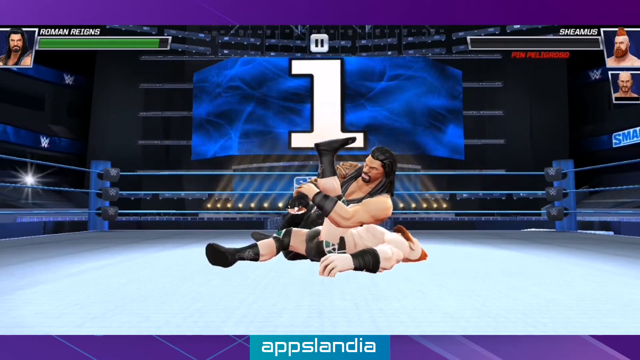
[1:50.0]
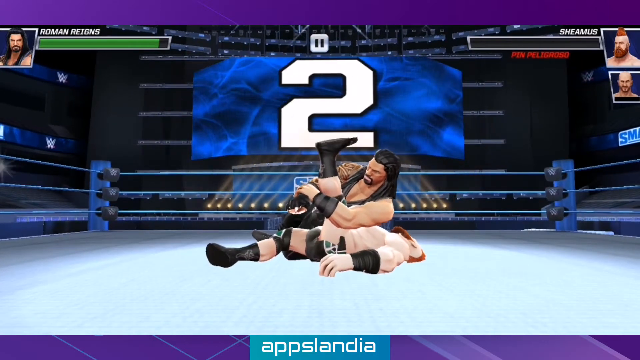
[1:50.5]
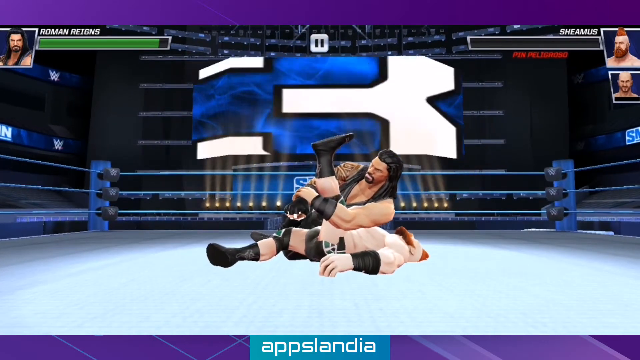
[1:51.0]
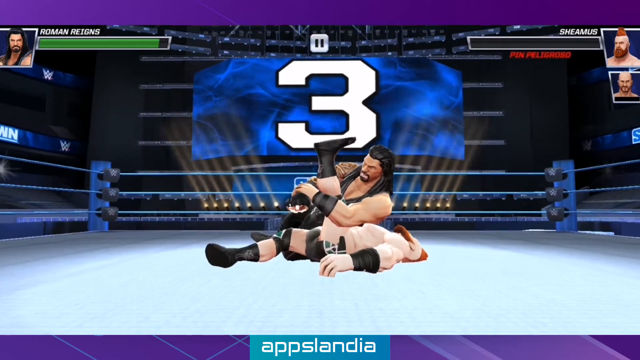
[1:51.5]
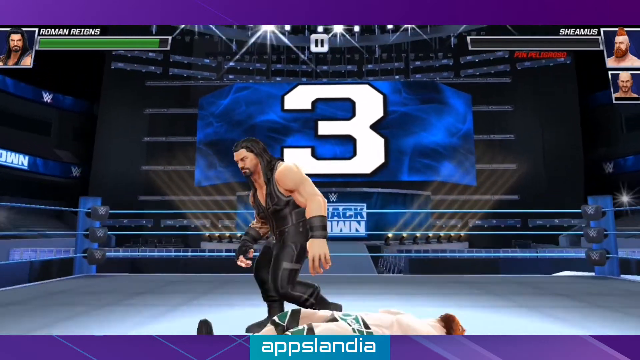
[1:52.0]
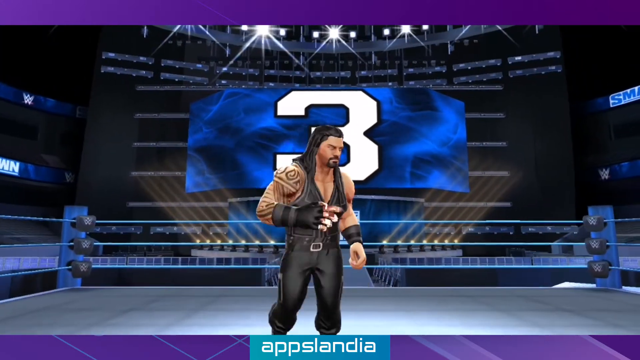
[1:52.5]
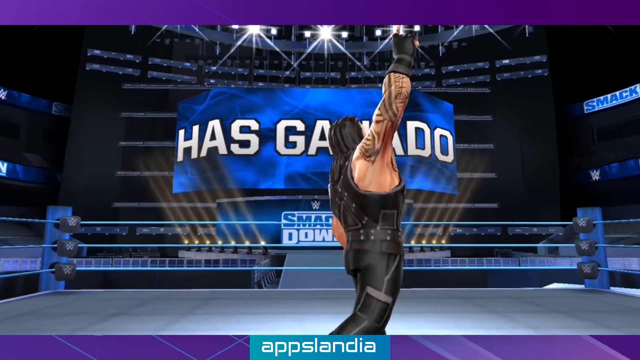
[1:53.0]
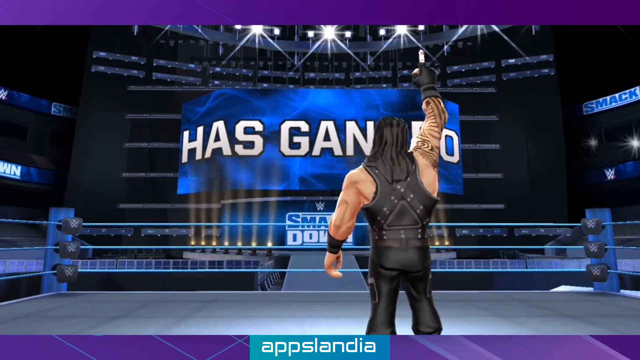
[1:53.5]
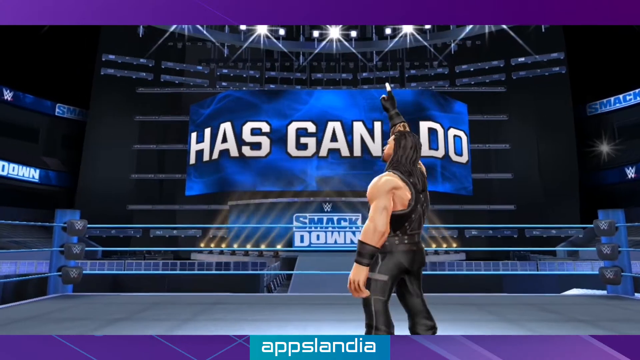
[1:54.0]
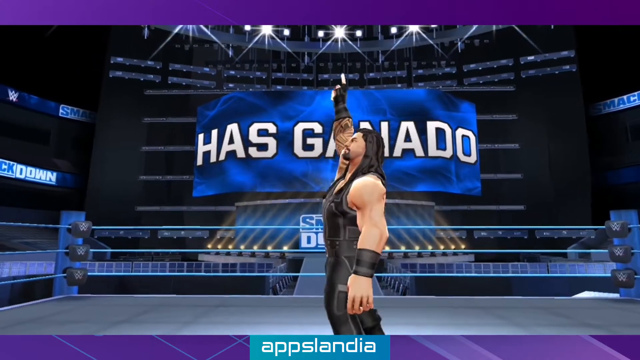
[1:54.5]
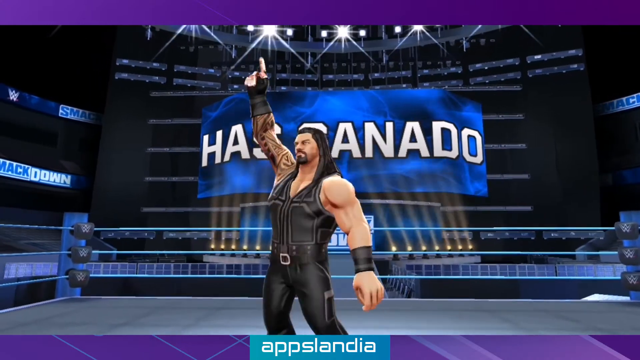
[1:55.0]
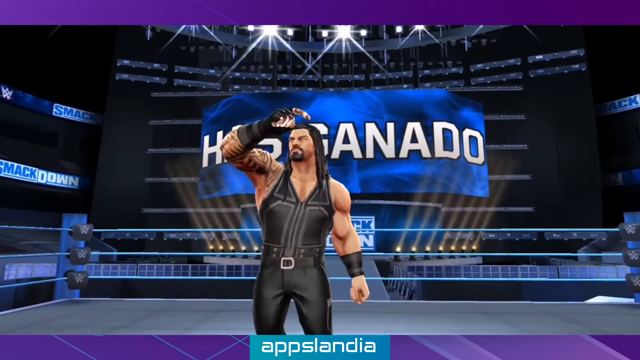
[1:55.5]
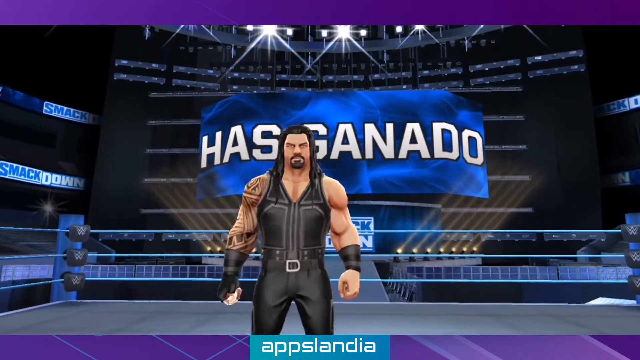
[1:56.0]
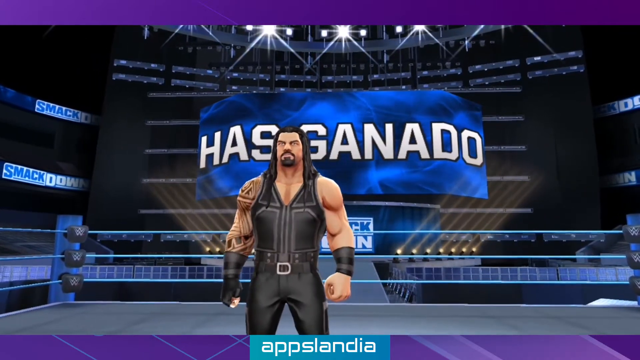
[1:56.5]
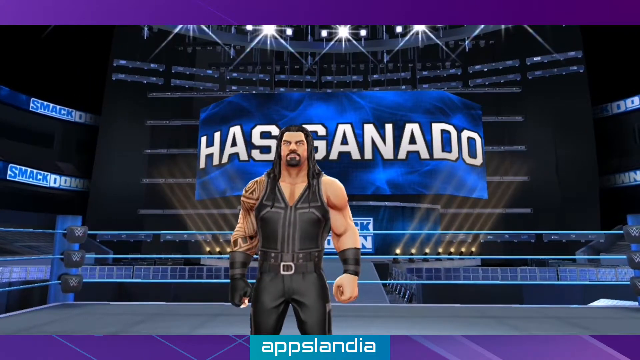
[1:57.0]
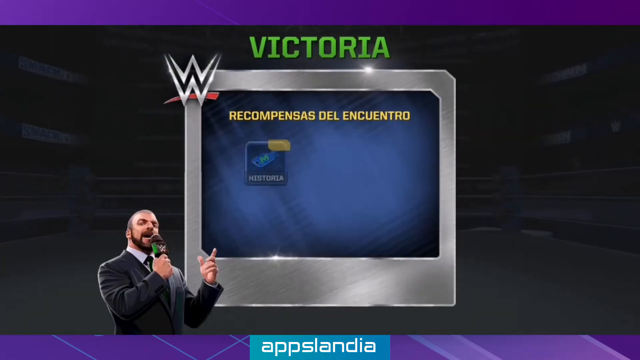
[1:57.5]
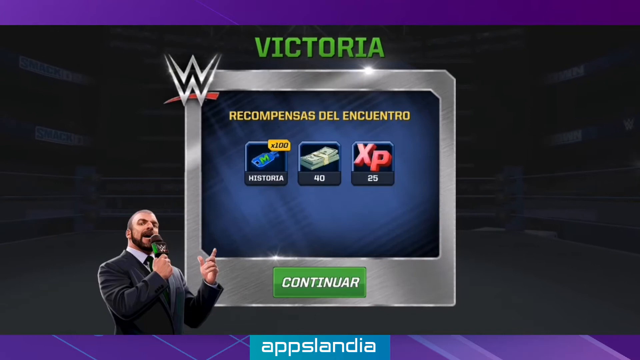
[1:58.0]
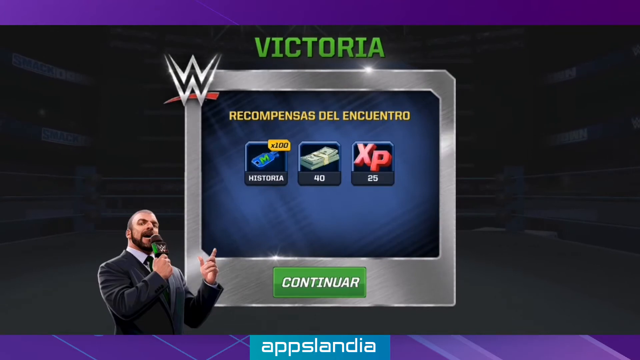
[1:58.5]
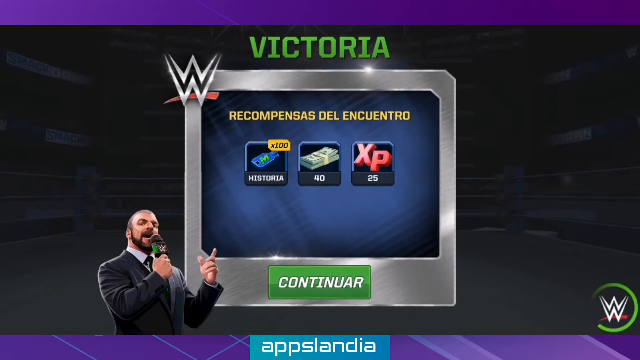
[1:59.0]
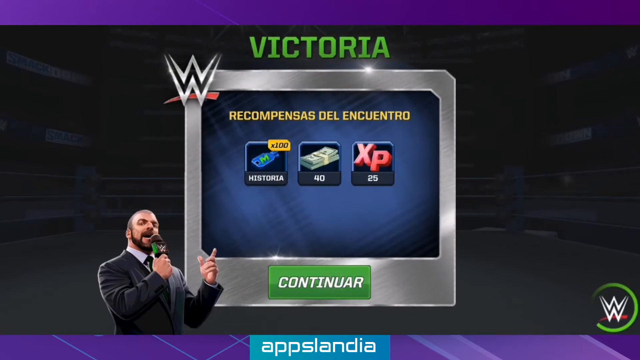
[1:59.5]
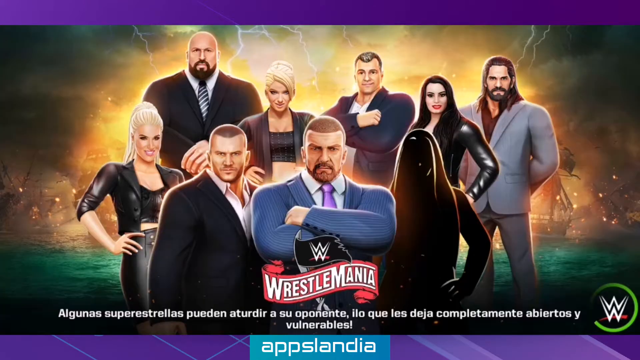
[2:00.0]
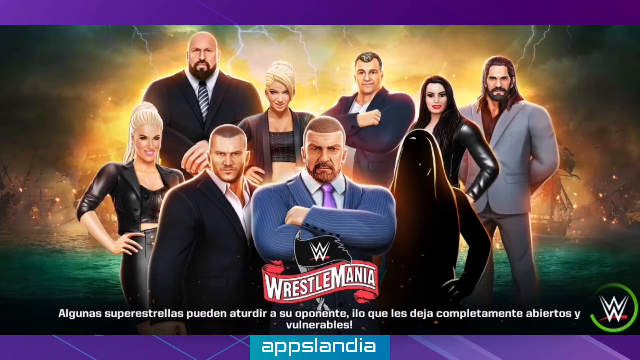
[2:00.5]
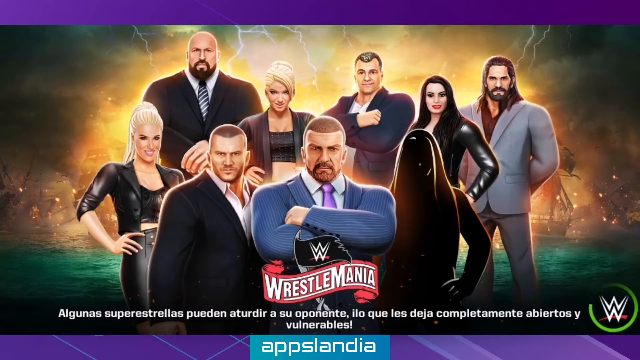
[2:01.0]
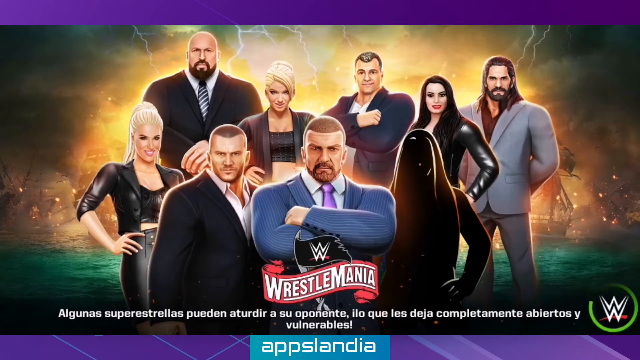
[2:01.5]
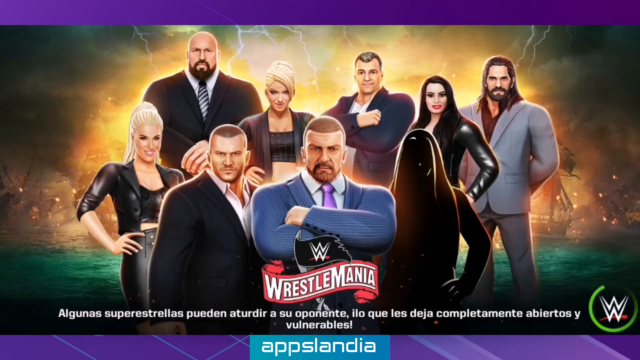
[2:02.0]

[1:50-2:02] Player one finally pins player two with a count of one, two, three, and there is no tap out. The winner raises their hand up, and cash and XP points are awarded. The game looks very old school based on the graphics.